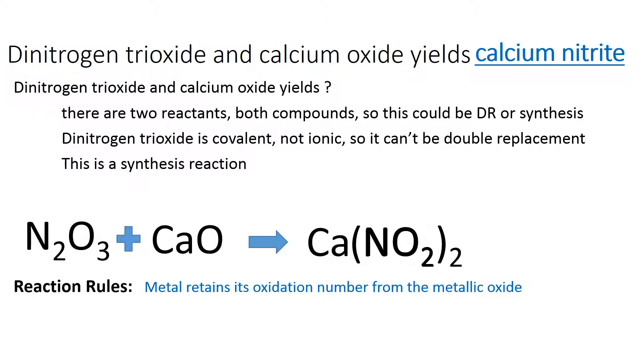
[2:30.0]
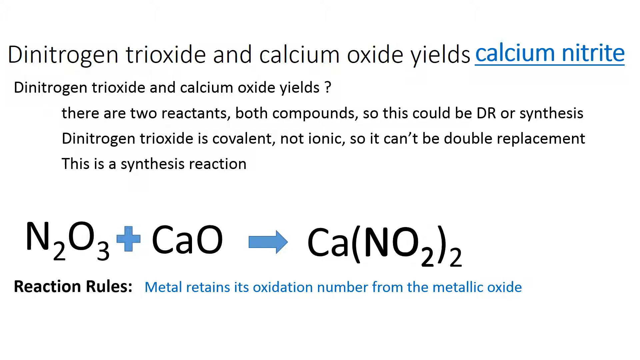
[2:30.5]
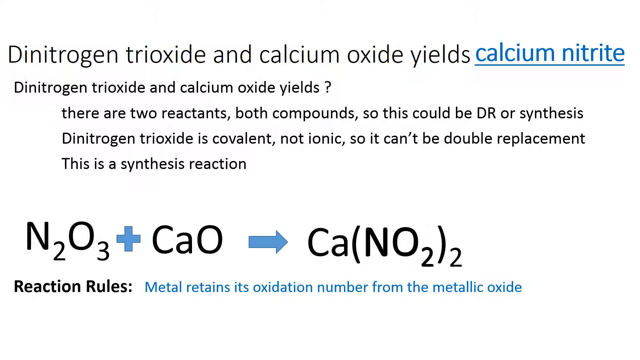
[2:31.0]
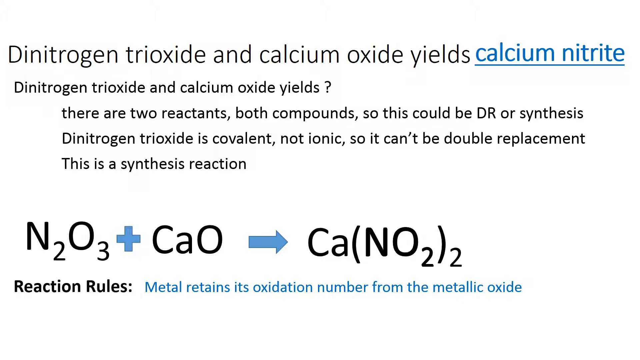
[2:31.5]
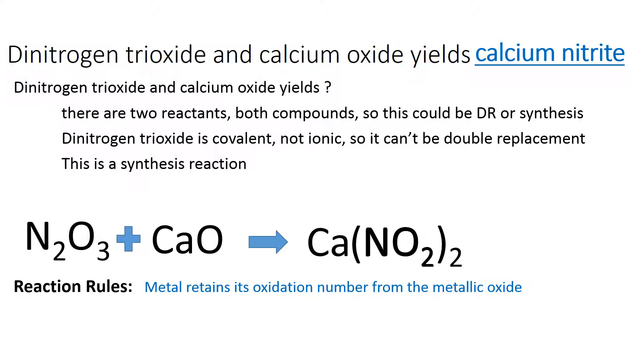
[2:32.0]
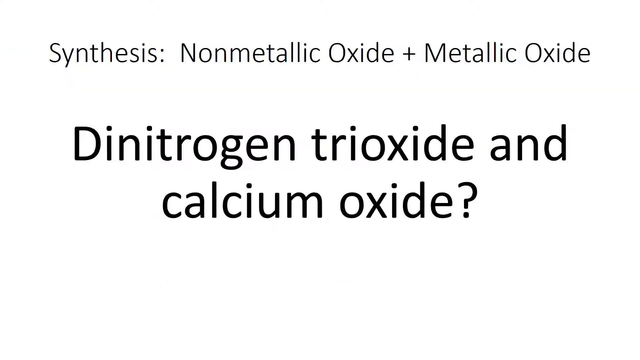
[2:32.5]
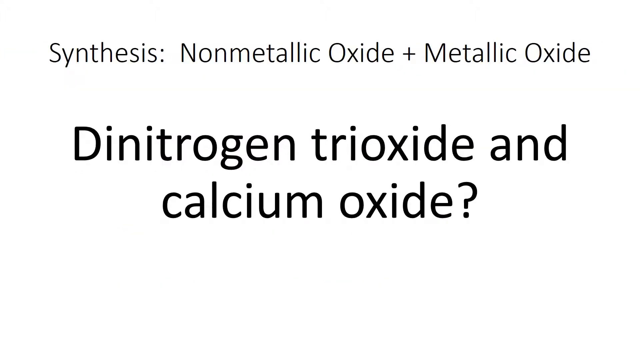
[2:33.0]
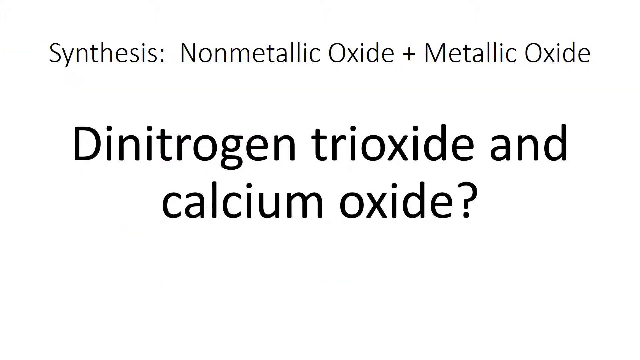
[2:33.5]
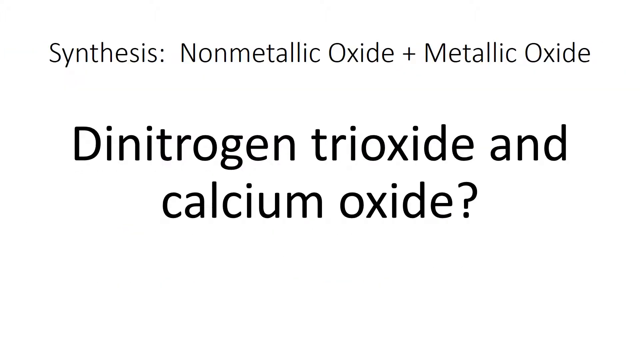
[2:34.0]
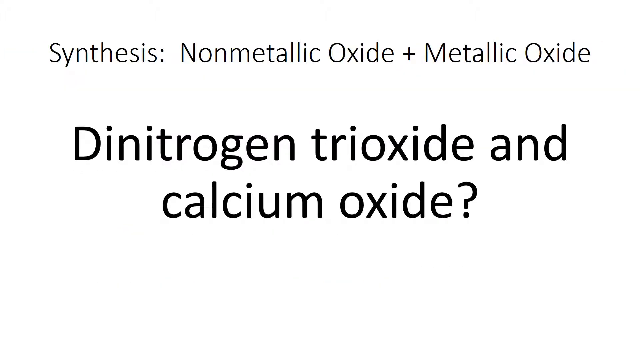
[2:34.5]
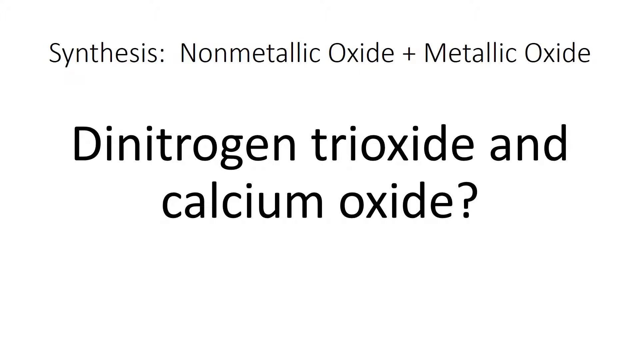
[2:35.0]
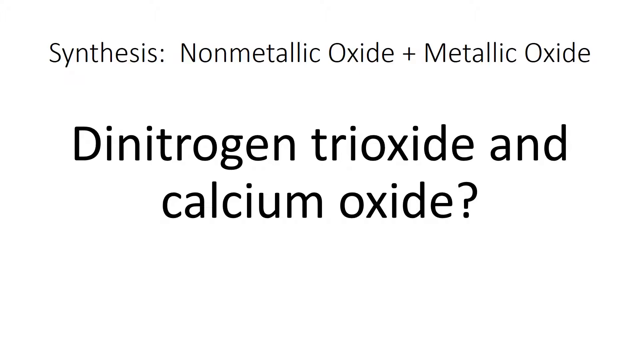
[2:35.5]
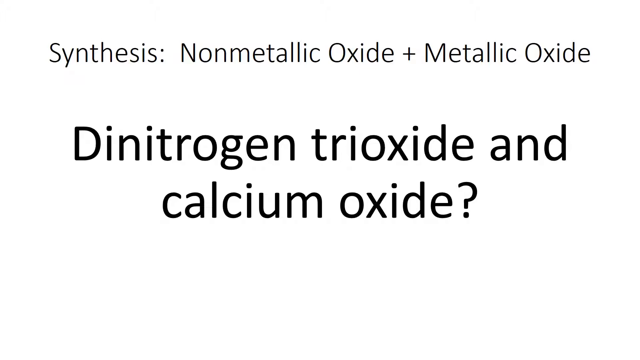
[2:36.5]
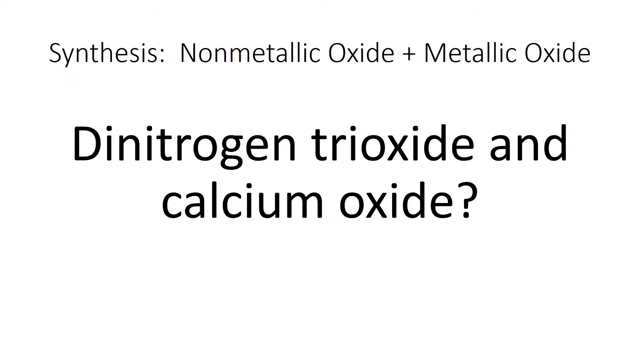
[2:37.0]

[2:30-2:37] On a white background, black text at the top says "Dinitrogen trioxide and calcium oxide yields" with blue underlined text to its right saying "calcium nitrate." Beneath it, smaller black text says "Dinitrogen trioxide and calcium oxide yields" with a ? symbol to its right, followed by black lines saying "there are two reactants, both compounds, so this could be DR or synthesis," "Dinitrogen trioxide is covalent, not ionic, so it can't be double replacement," and "This is a synthesis reaction." Beneath that is larger black text "N2O3," a blue + mark, black text "CaO," a blue right arrow, and black text "Ca(NO2)2." Below is black text "Reaction Rules:" with blue text saying "Metal retains its oxidation number from the metallic oxide." The text disappears. A white background then shows black text at the top that says "Synthesis: Nonmetallic Oxide + Metallic Oxide," and beneath it larger black text that says "Dinitrogen trioxide and calcium oxide?"